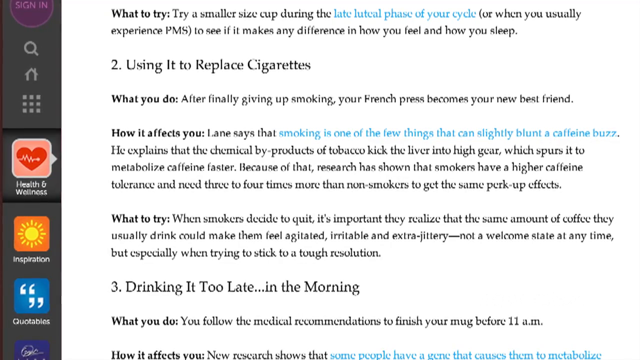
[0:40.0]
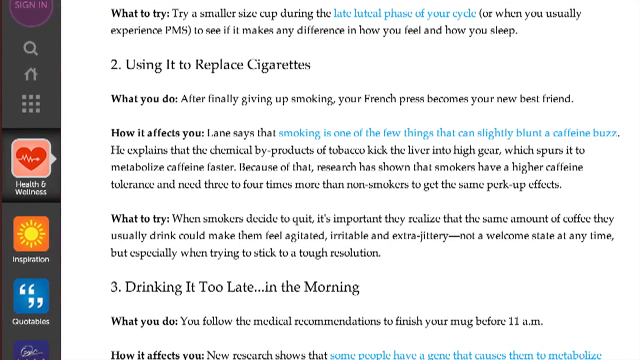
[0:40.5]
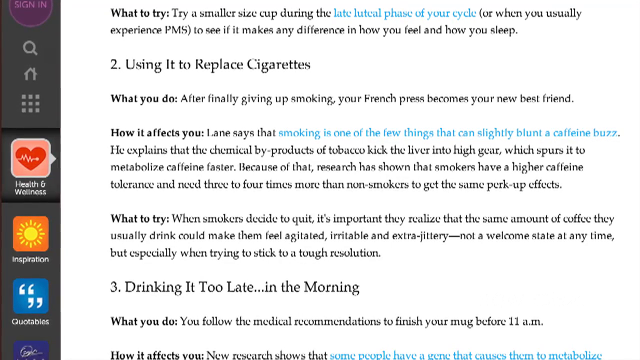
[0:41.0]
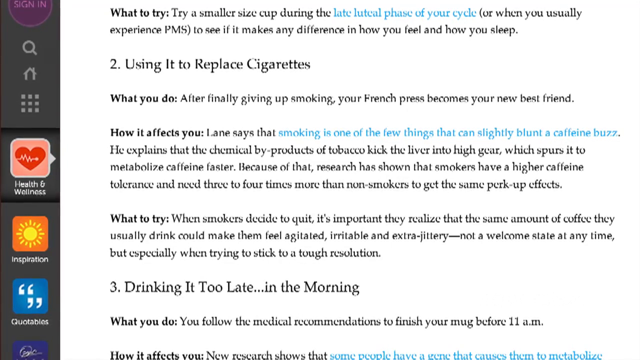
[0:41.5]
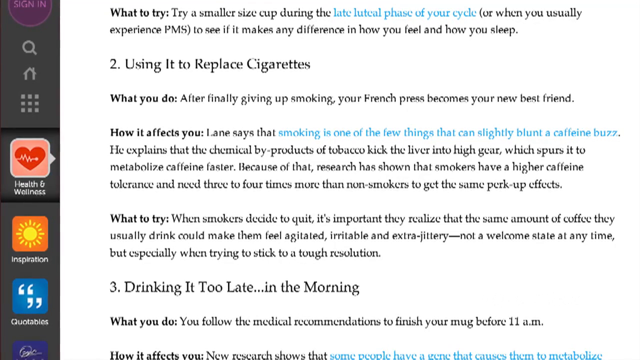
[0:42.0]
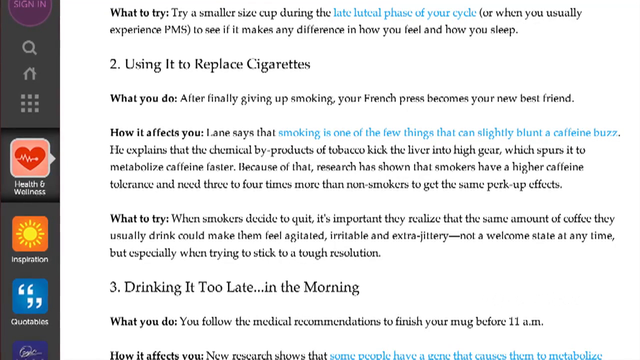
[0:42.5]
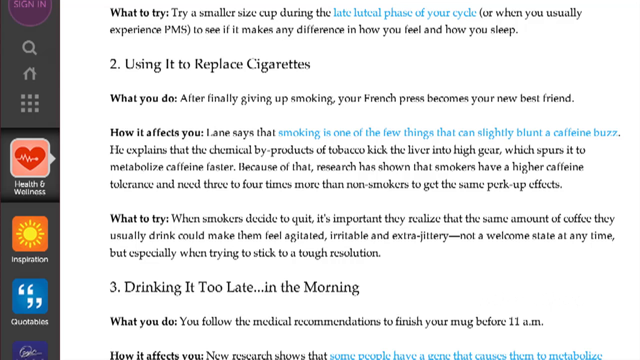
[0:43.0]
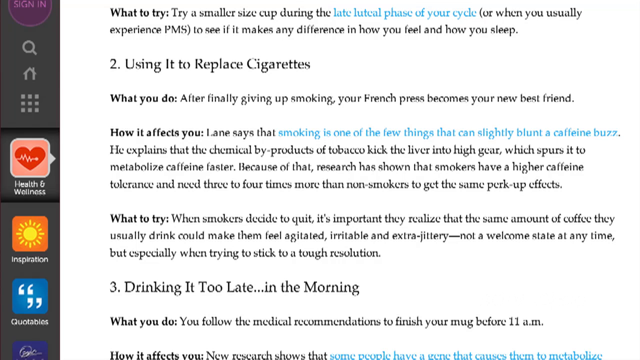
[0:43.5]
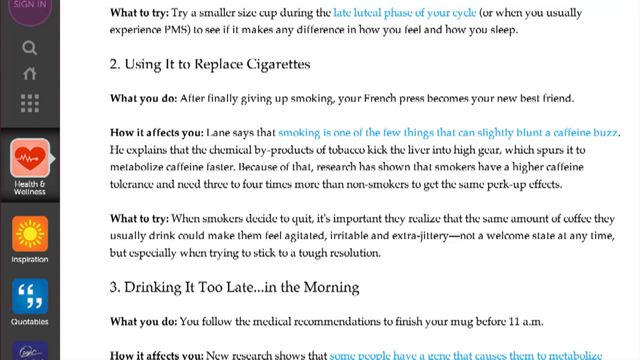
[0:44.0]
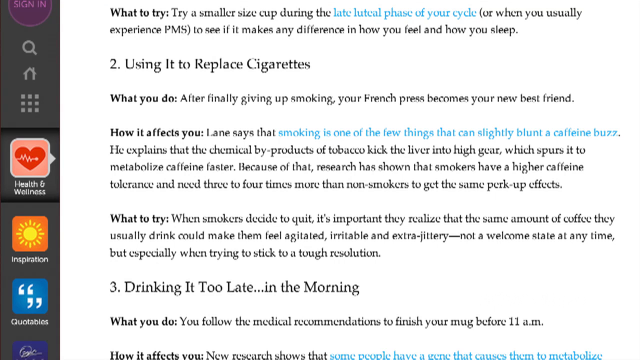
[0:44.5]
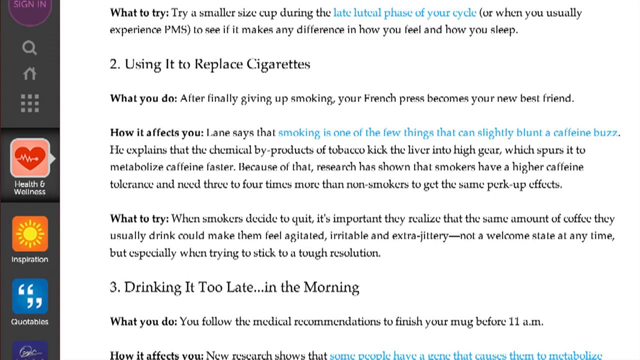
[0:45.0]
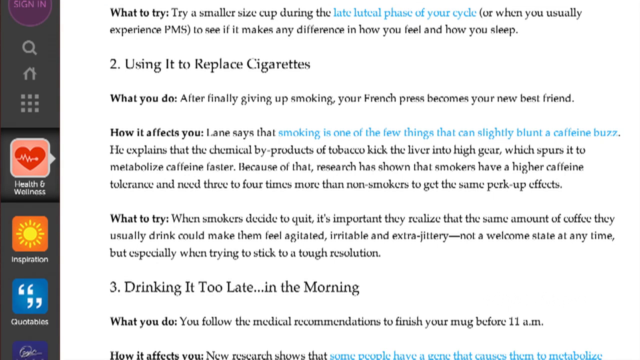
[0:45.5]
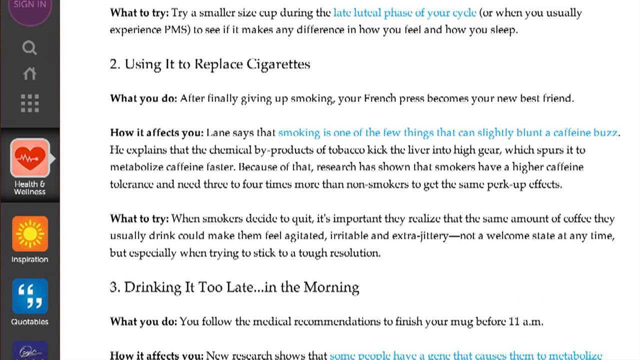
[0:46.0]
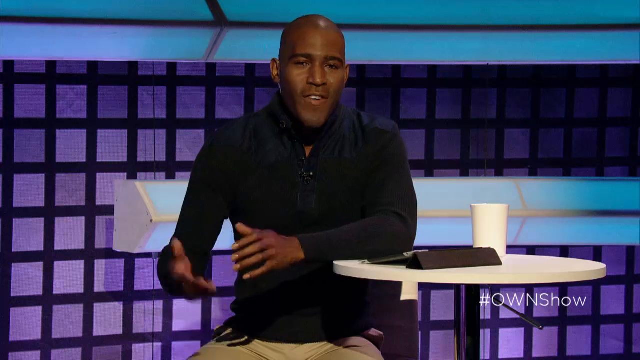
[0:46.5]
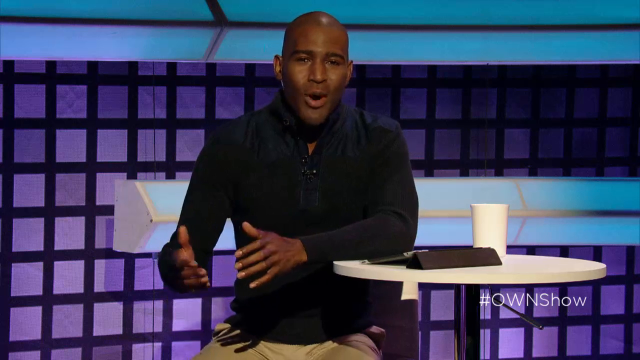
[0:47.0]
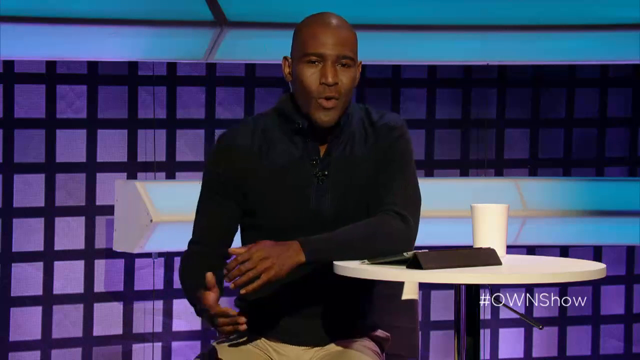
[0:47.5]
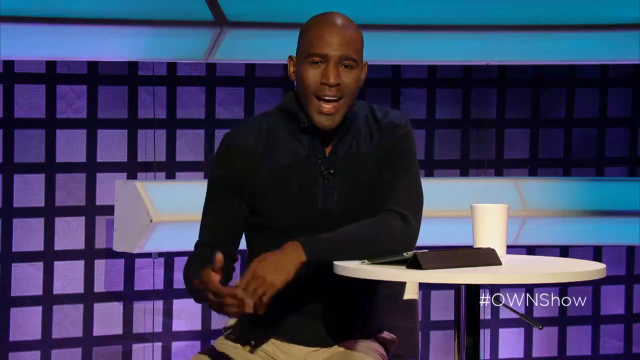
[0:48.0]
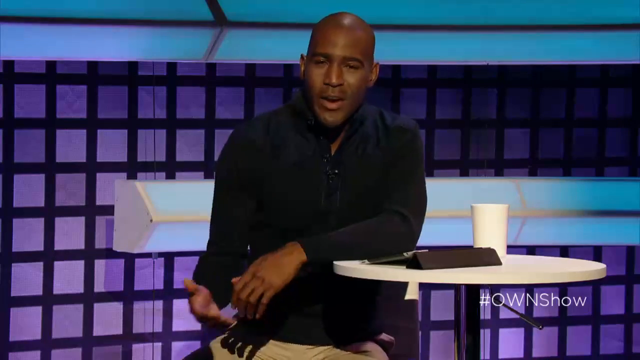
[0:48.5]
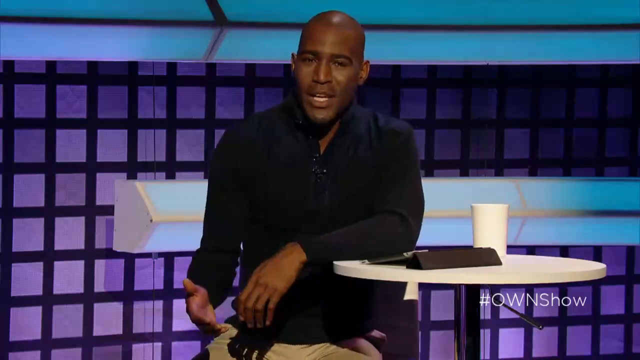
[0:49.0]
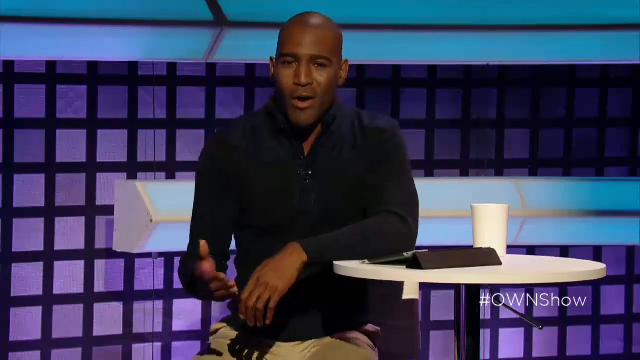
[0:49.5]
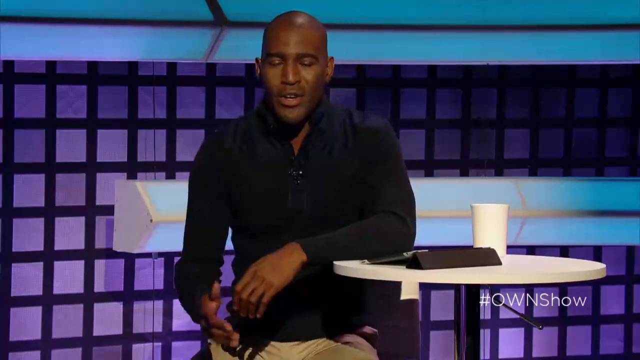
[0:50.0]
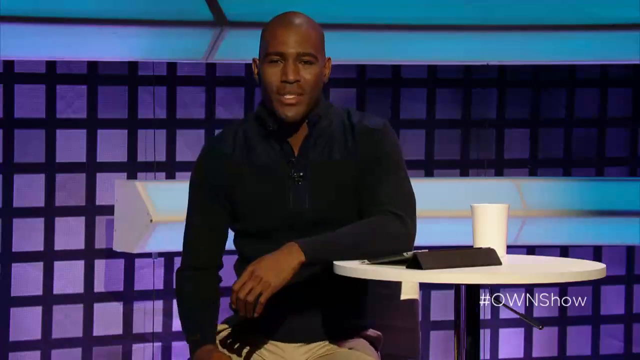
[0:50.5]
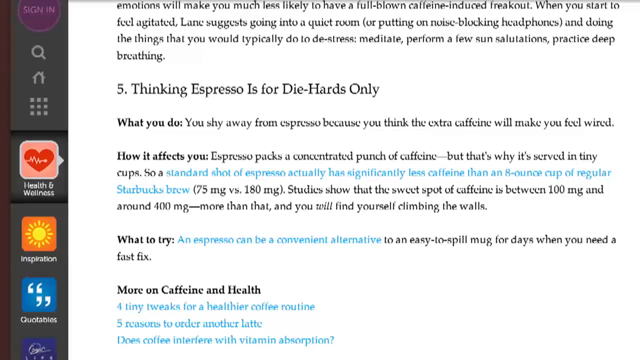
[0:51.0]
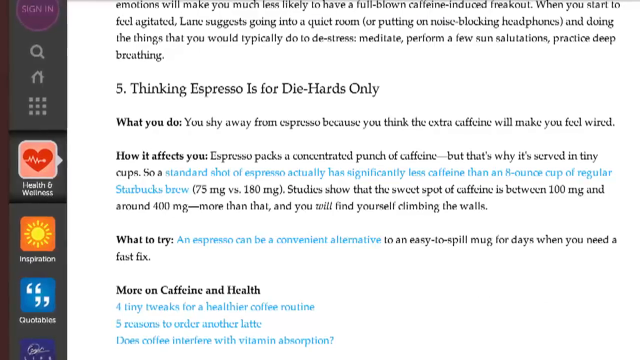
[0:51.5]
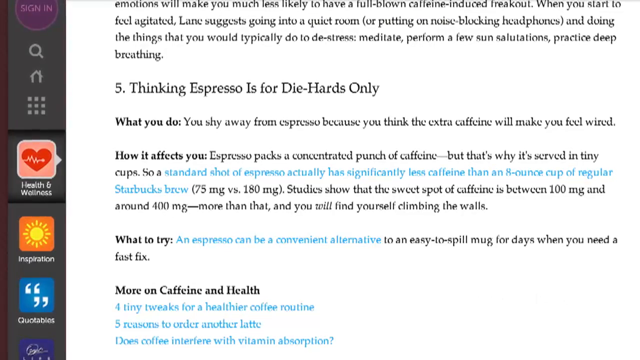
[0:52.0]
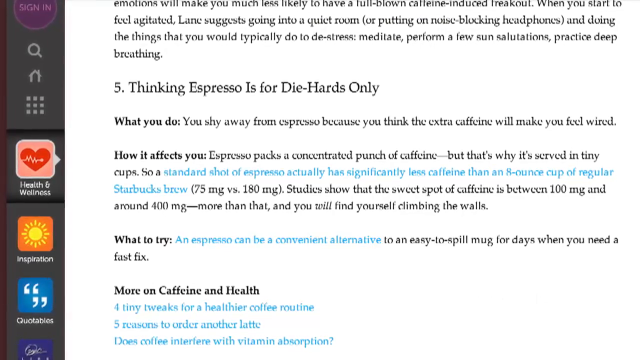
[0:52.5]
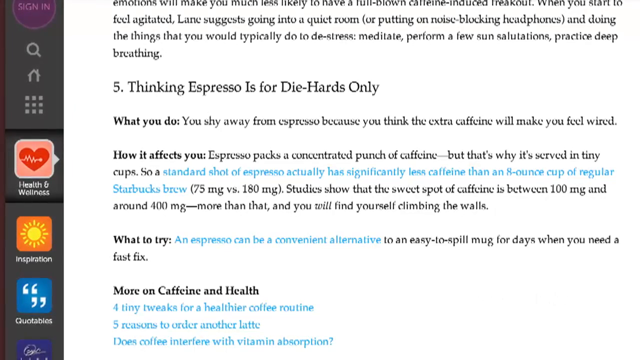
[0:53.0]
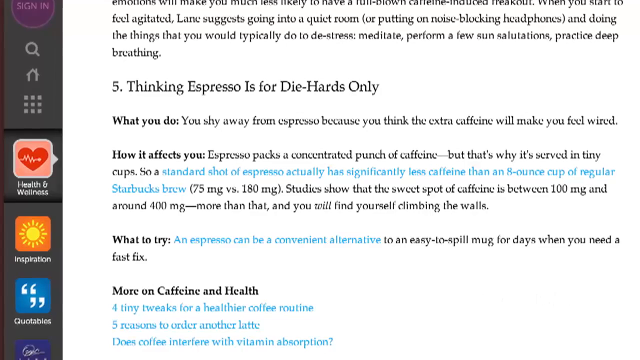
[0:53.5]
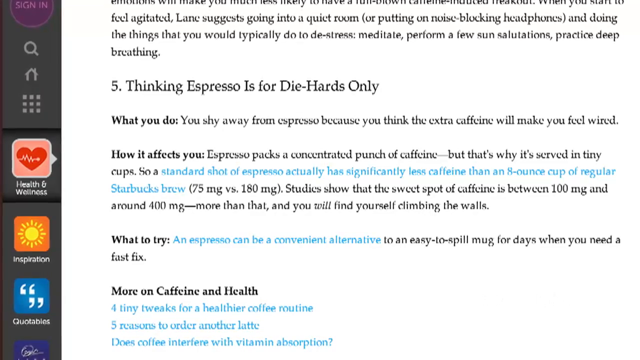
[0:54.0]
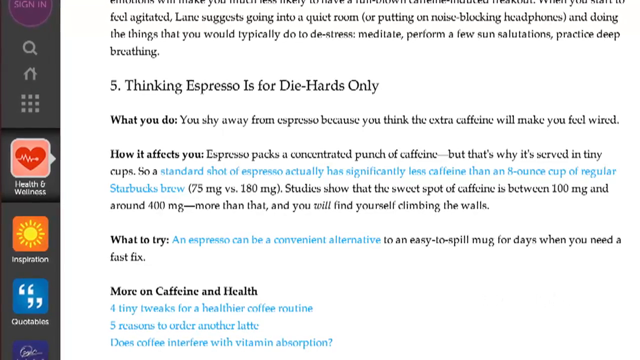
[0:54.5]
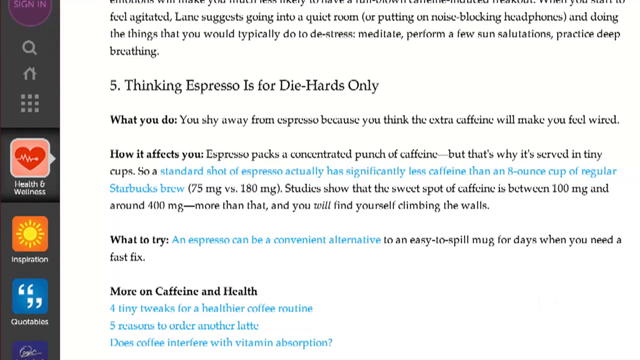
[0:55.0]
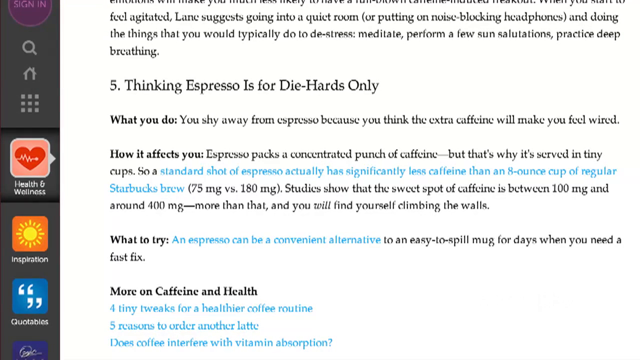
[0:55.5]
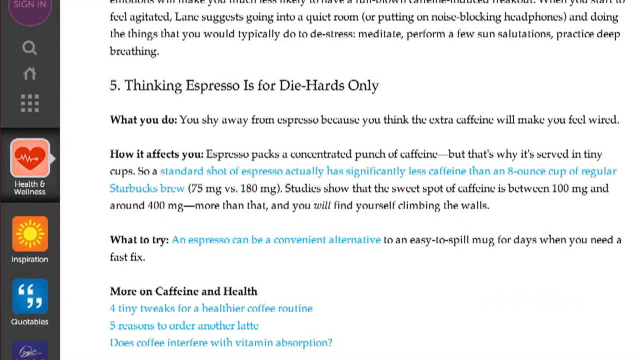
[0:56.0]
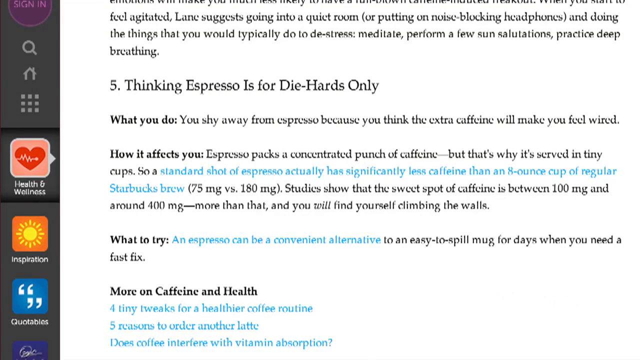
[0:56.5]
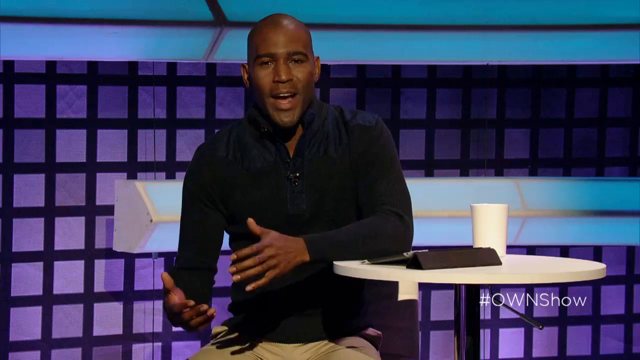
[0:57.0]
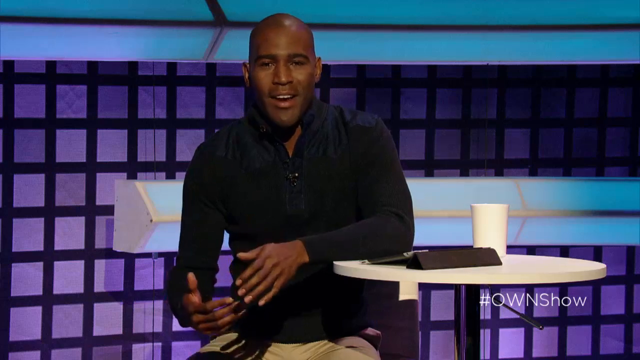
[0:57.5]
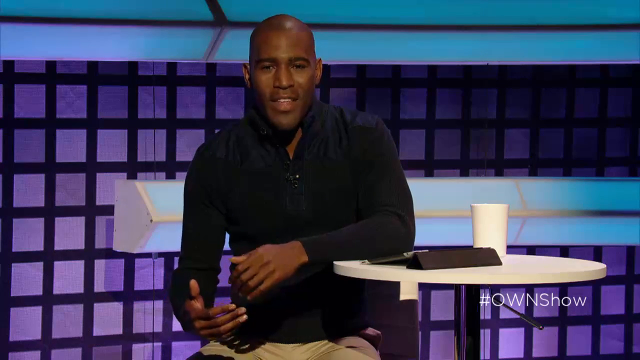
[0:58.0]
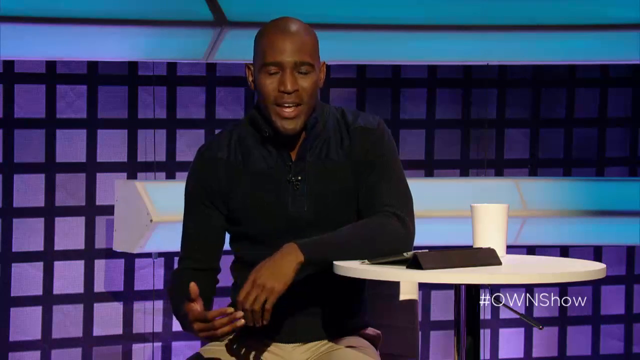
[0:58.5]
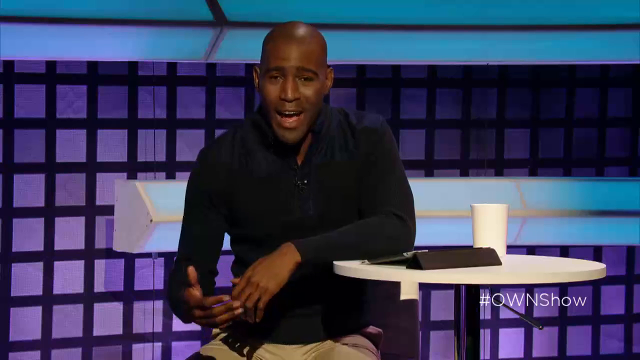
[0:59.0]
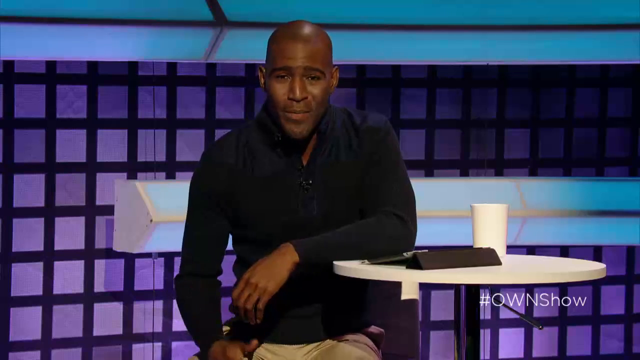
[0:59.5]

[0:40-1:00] What appears to be a shared computer screen is shown. In the left corner are different clickable tabs: a purple circle reading "sign in," a search symbol shaped like a magnifying glass, a house, and something like a waffle. Below these is an icon of what looks like a heart with a heart monitor in the middle, labeled "health and wellness," an orange icon with a yellow sun labeled "inspiration," and a blue icon with quotation marks labeled "quotables." The zoomed-in part of the article reads "number two, using it to replace cigarettes," followed by a blurb on what you would do, how it affects you, and what to try. The screen then cuts to a man talking to the audience or the camera. He wears what looks like a black button-down and khaki pants and sits at a table with a white top, with a coffee mug and an iPad on top of it. The article then transitions to "thinking espresso is for diehards only," followed by a blurb on what you do, how it affects you, and what to try.